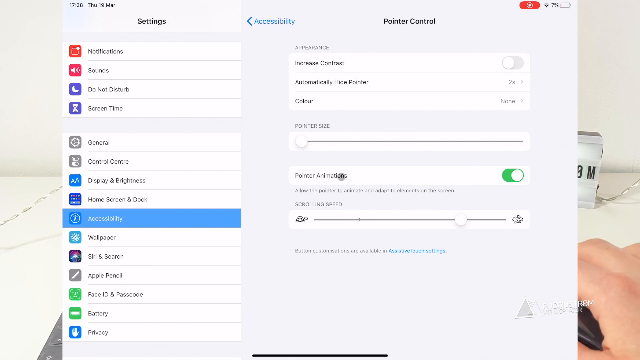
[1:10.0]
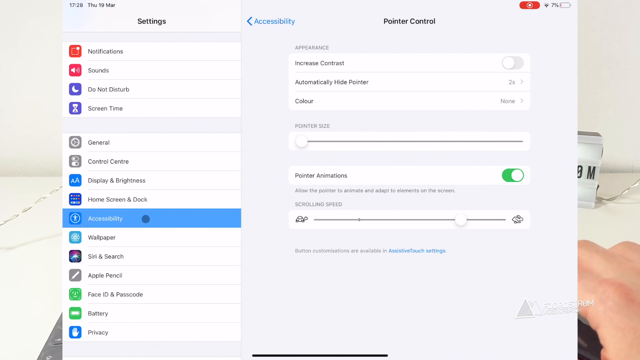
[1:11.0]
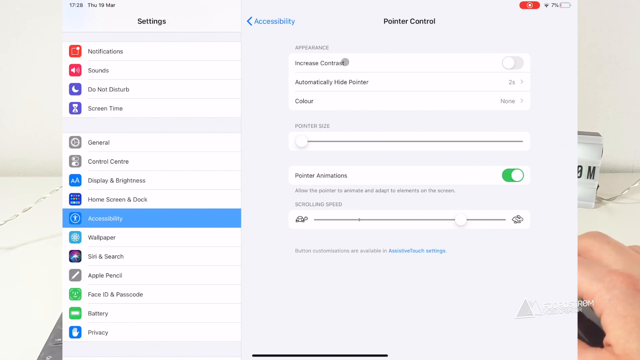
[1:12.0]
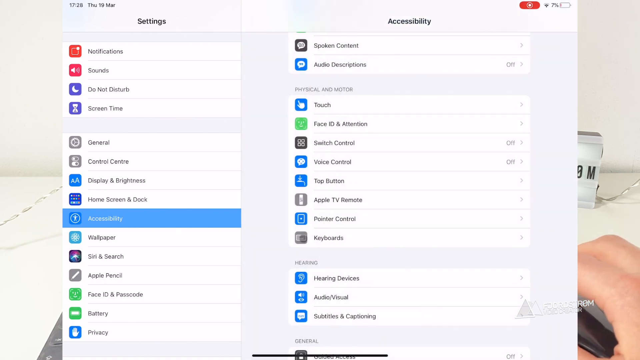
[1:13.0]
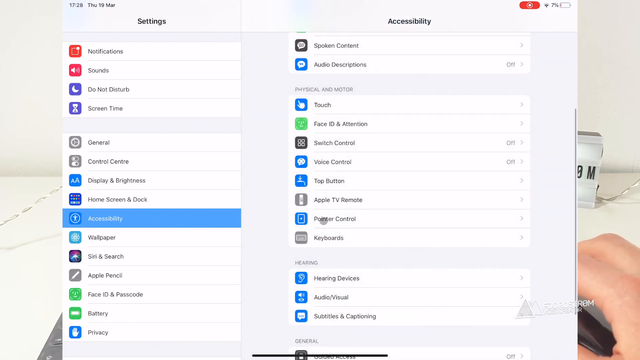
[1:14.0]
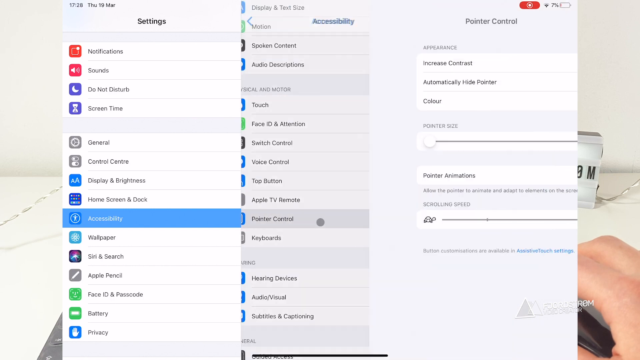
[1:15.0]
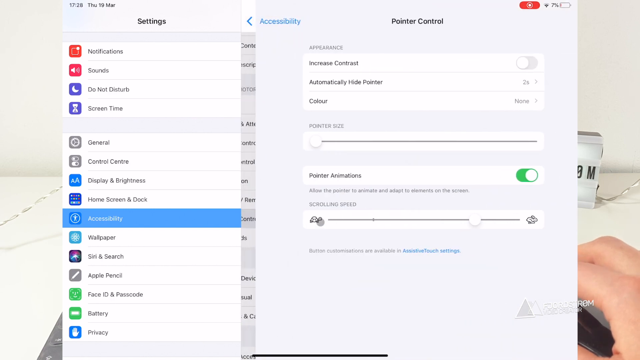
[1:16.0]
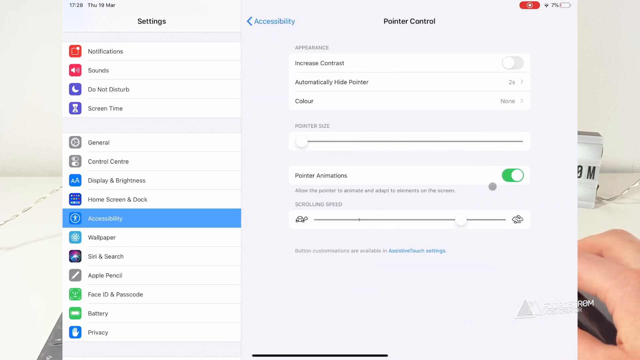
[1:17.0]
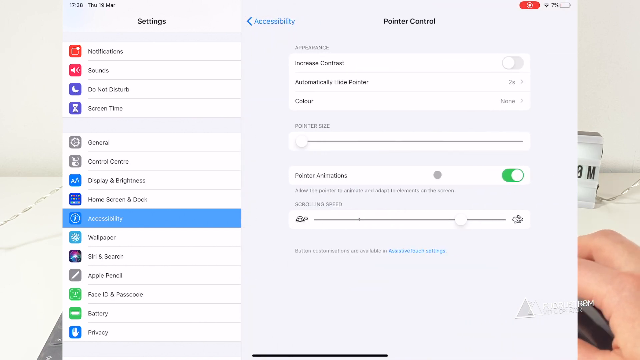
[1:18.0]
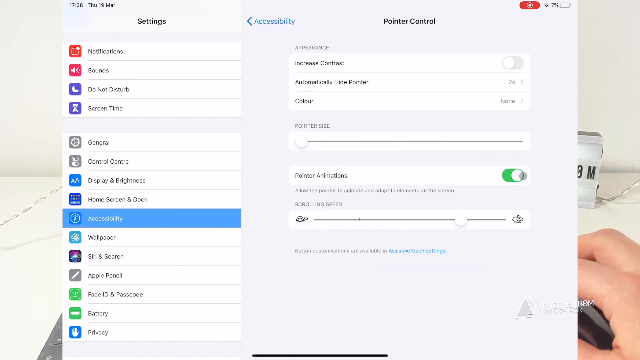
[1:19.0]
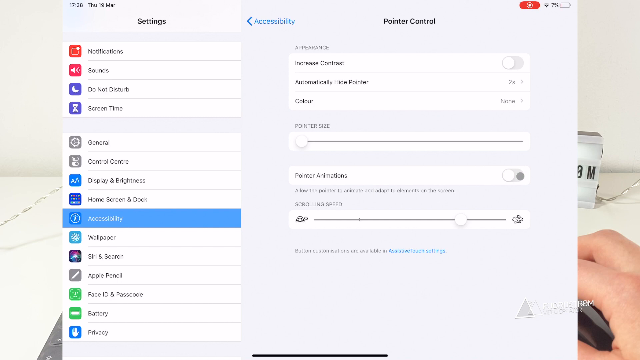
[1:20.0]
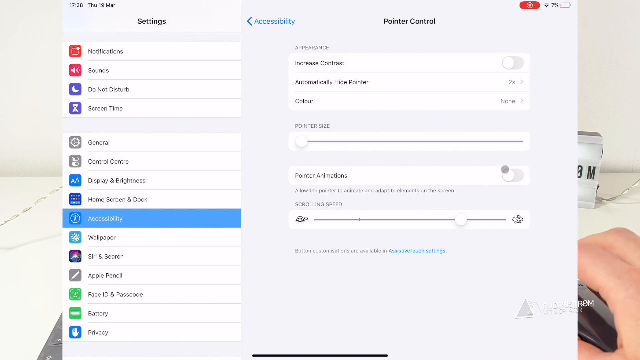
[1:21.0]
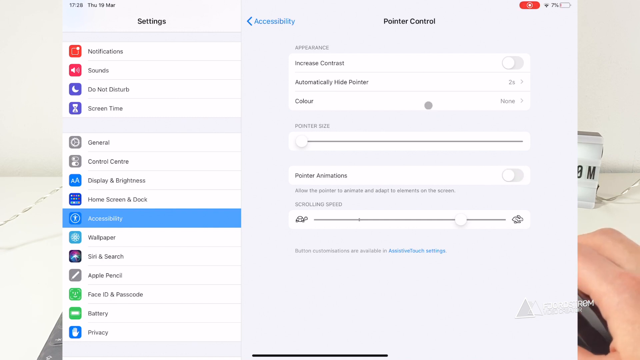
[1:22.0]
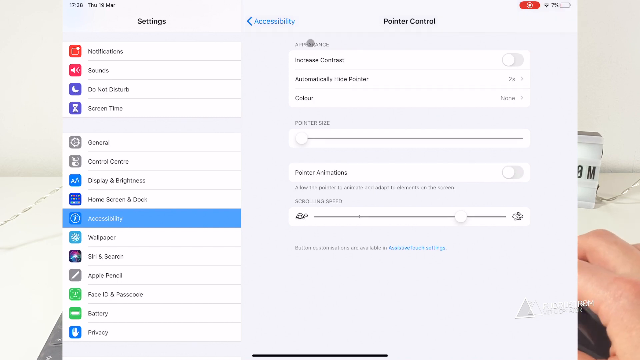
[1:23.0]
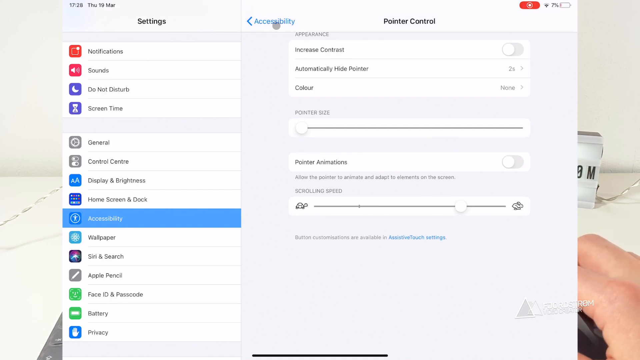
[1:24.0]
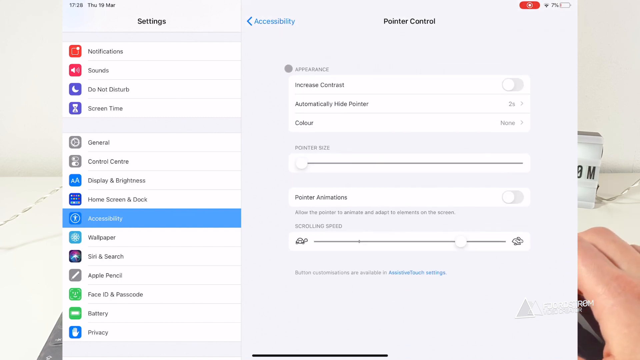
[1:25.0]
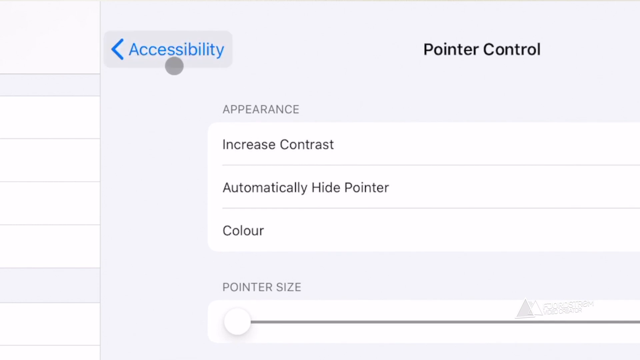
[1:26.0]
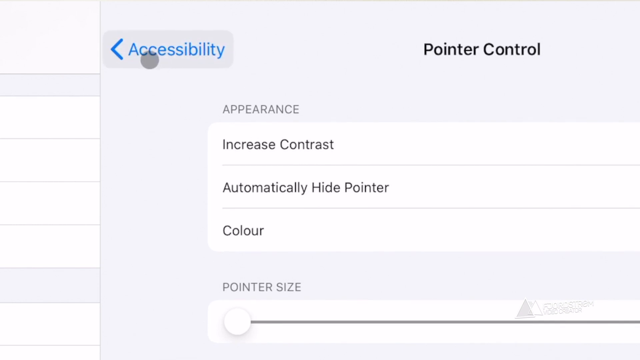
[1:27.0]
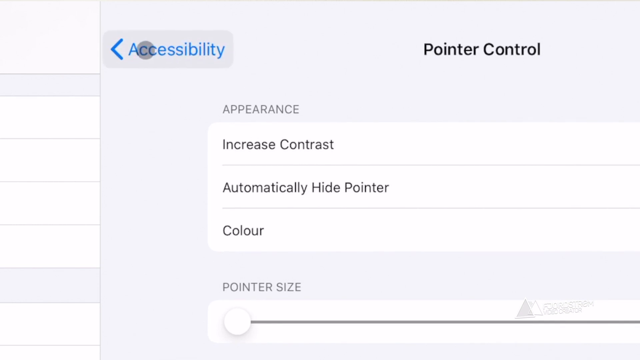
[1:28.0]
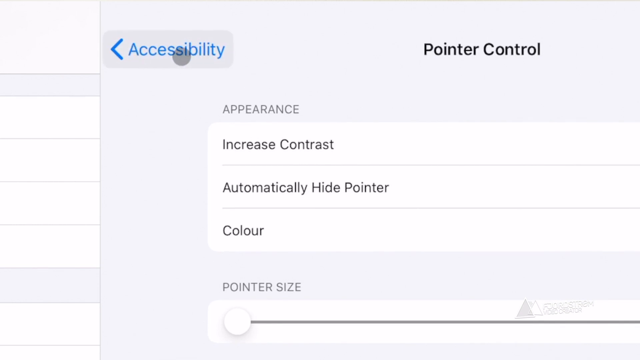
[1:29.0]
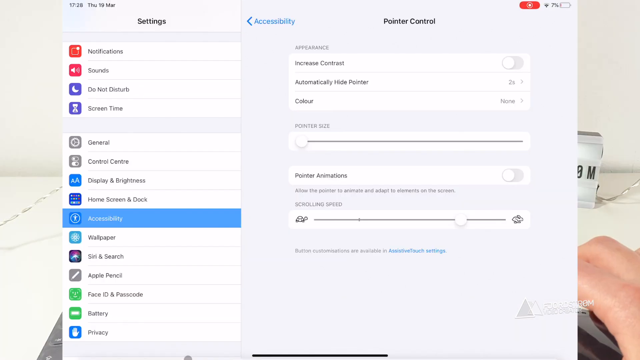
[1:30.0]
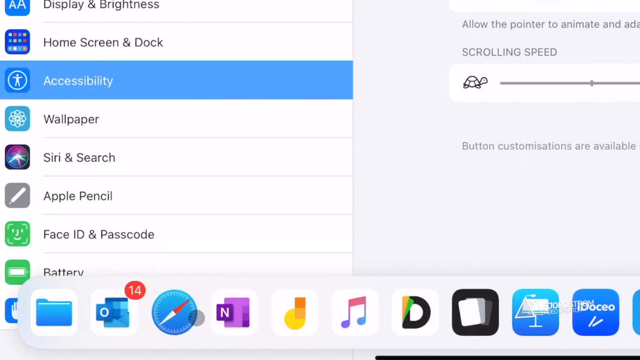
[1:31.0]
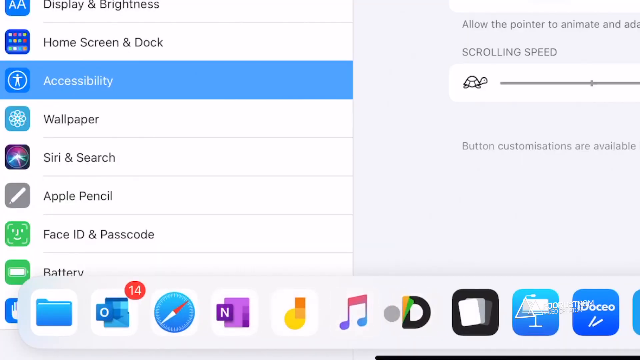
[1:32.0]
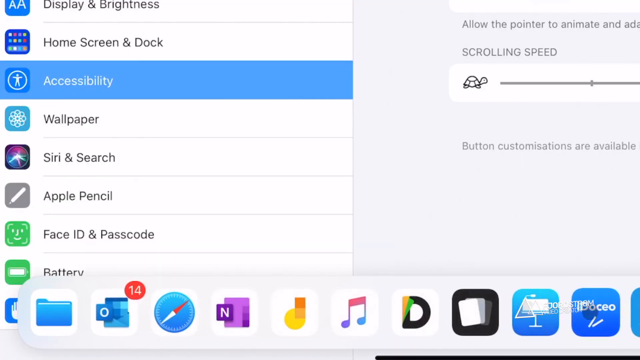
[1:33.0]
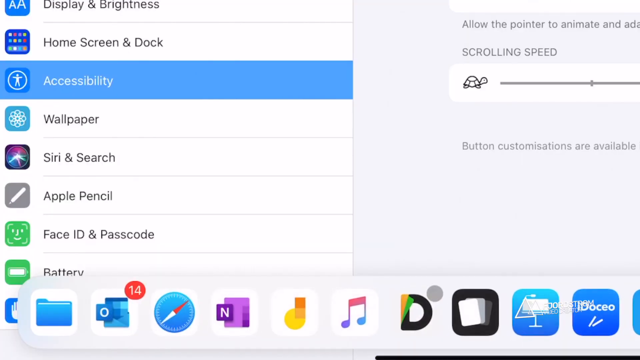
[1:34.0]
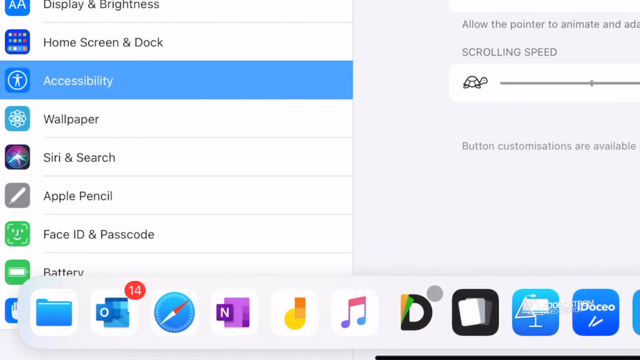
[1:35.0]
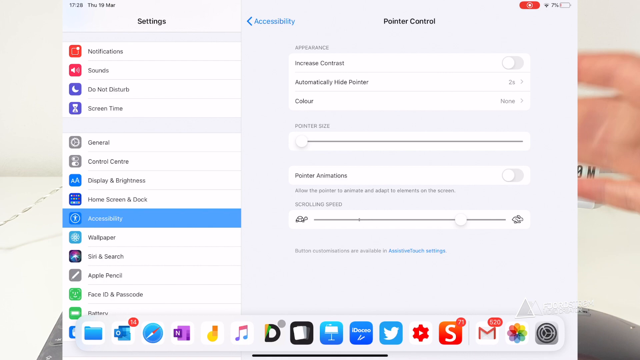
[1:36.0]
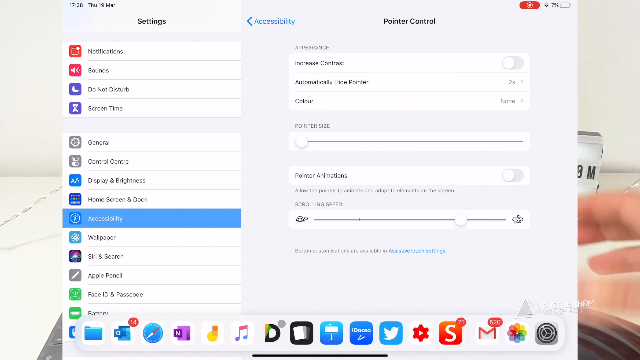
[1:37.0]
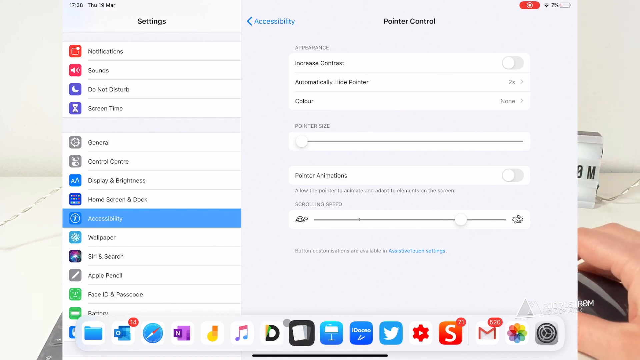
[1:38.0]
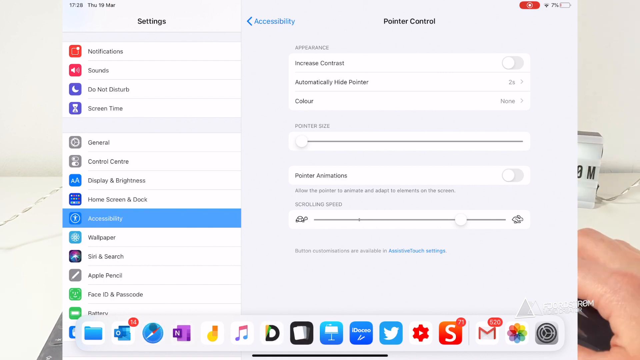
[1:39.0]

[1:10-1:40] Settings on a computer list notifications, sounds, do not disturb, screen time, general, control center, display and brightness, home screen and dock, accessibility, wallpaper, Siri and search, Apple Pencil, face ID and passcode, battery and privacy. Under Accessibility, Pointer Control, there are appearance settings such as increase contrast, automatically hide pointer and color, an option to change the pointer size, a toggle for pointer animations, and a scrolling speed setting. He moves his mouse to Accessibility on the left, then to the top right corner. Another screen lists spoken content, audio descriptions, physical and motor, touch, face ID and attention, switch control, voice control, top button, Apple TV remote, pointer control, keyboards, hearing, hearing devices, audio, visual, subtitles and captioning. He moves to pointer control and clicks it, bringing up its settings. He goes toward a small green button, circles his mouse around it and back, then turns it off. He moves his mouse upward toward Accessibility, scrolling a little, and hovers over that section. He then goes over the icons at the bottom, including Safari, iTunes and other apps, which get a little bigger as he passes over them. He moves his hands a bit as if talking, then goes to a screen reading "magic mouse two gestures" with search results. One result appears to have been previously opened, shown in a light purple color, while the others are a dark blue-purple.